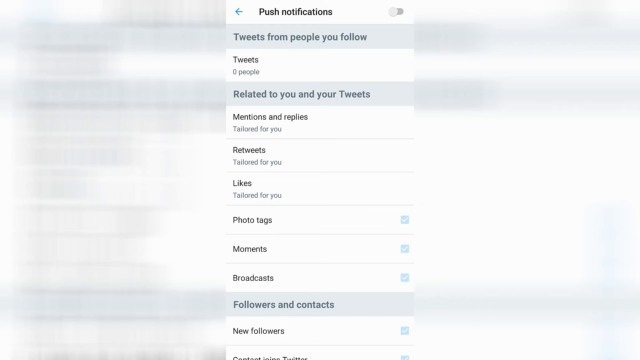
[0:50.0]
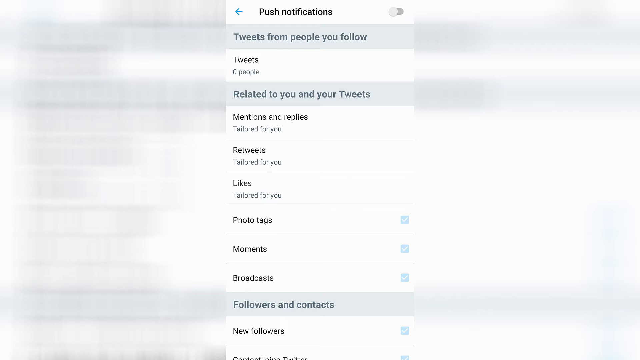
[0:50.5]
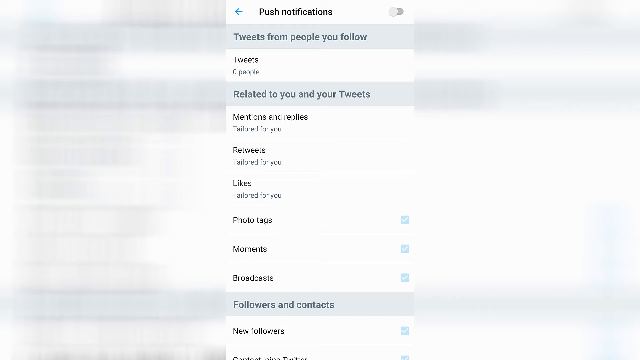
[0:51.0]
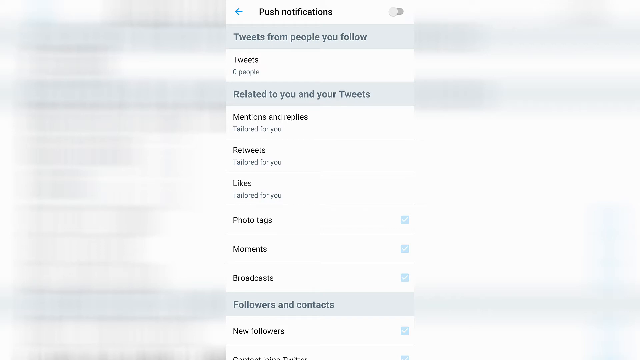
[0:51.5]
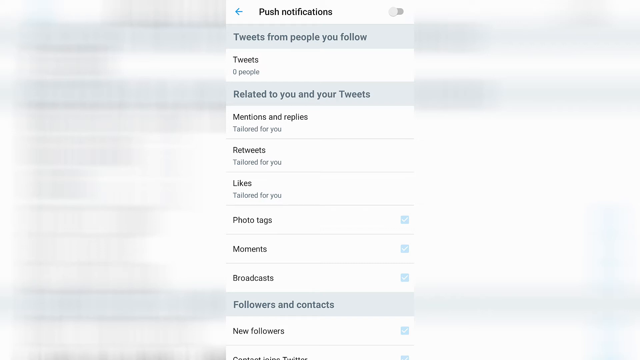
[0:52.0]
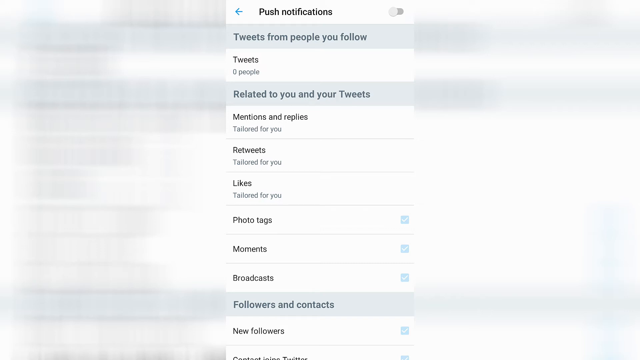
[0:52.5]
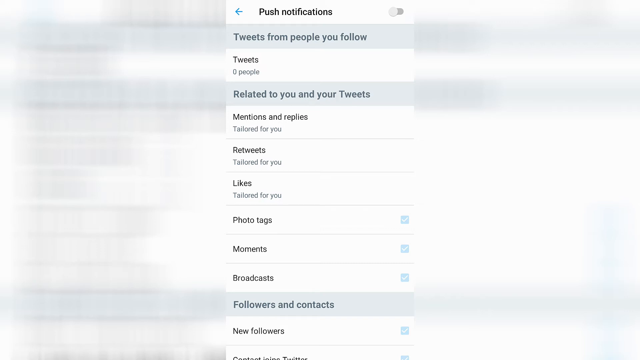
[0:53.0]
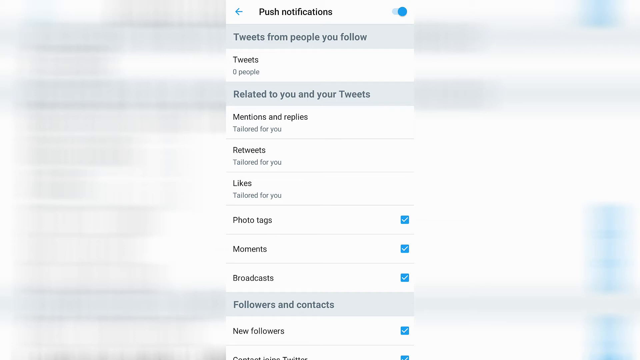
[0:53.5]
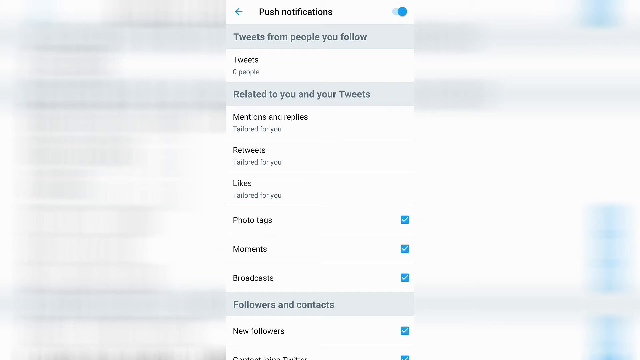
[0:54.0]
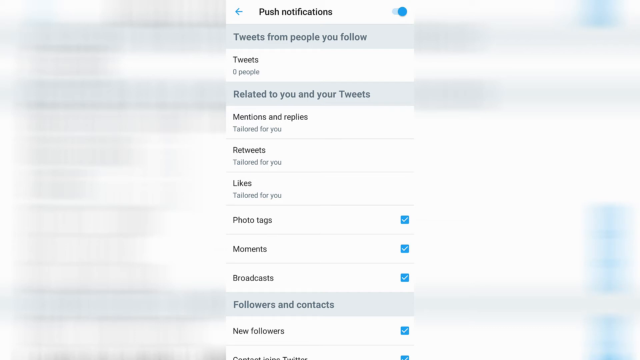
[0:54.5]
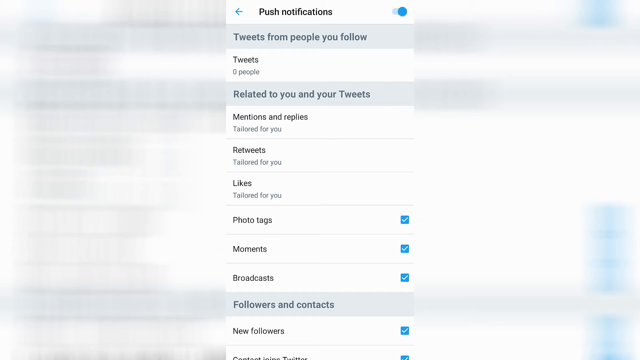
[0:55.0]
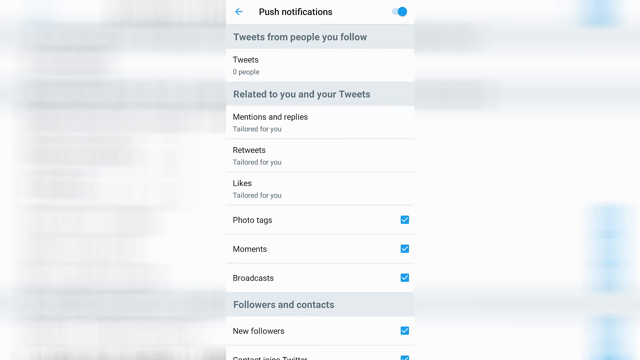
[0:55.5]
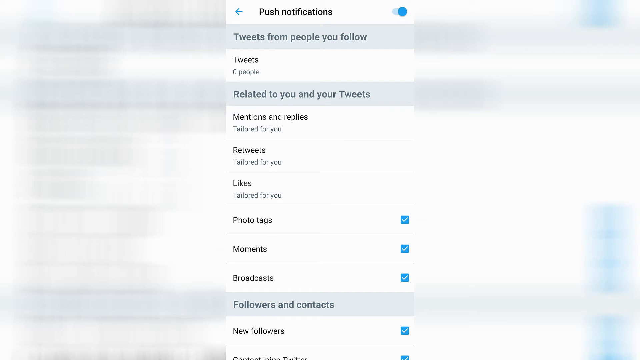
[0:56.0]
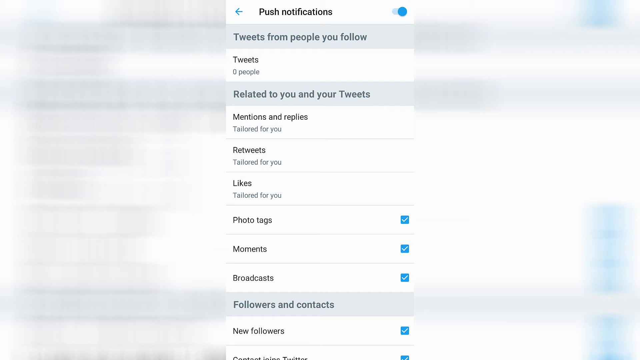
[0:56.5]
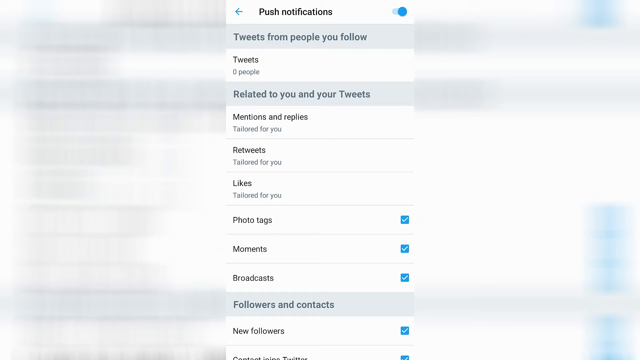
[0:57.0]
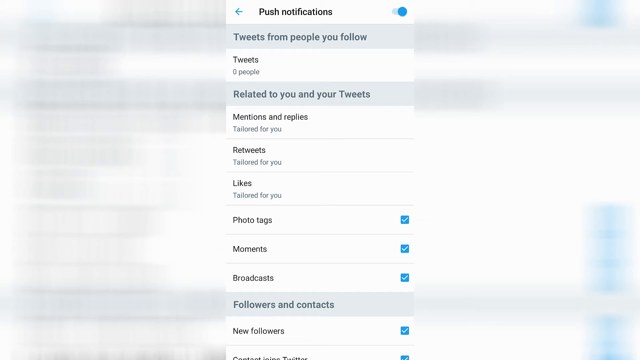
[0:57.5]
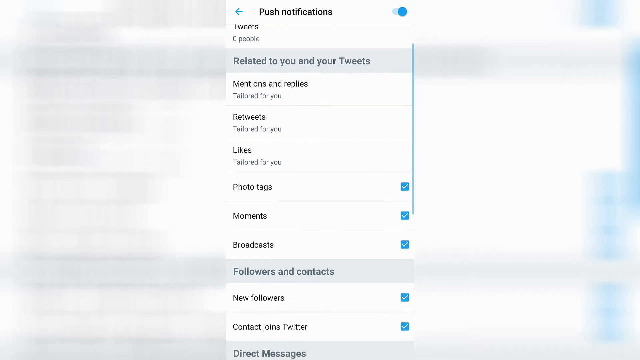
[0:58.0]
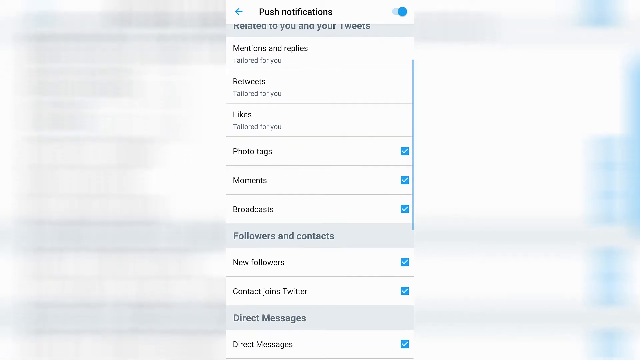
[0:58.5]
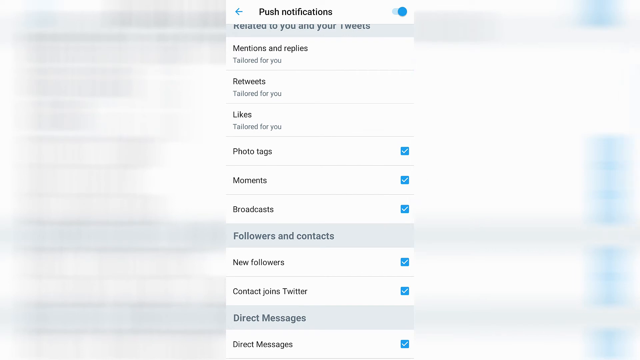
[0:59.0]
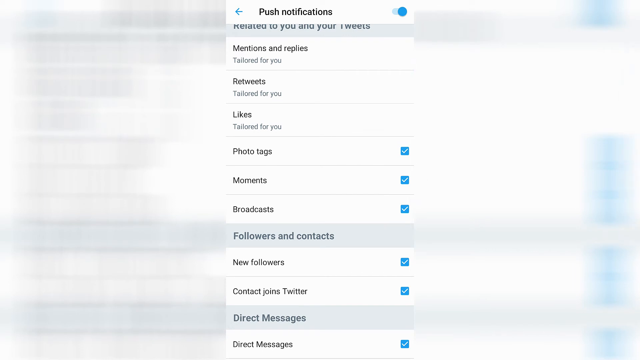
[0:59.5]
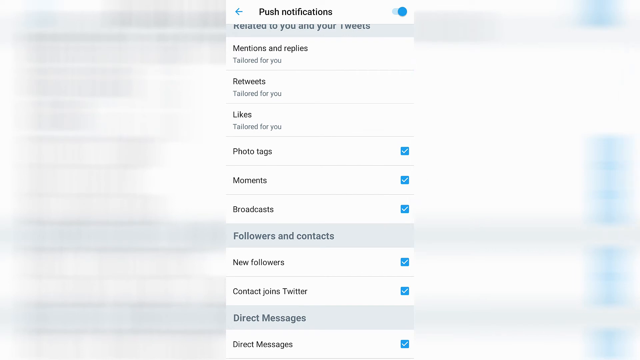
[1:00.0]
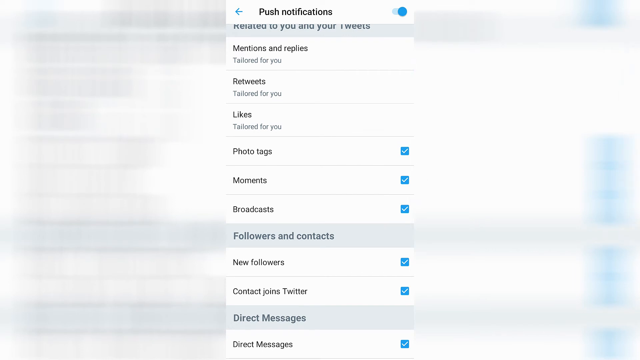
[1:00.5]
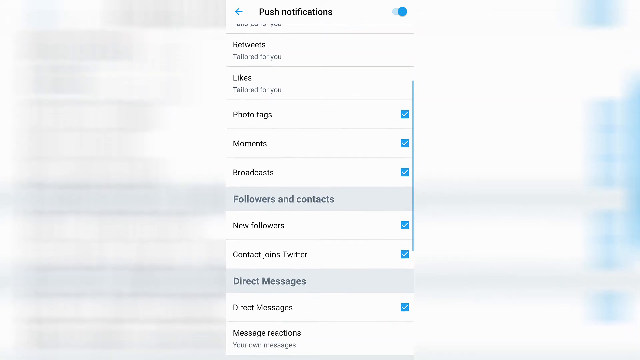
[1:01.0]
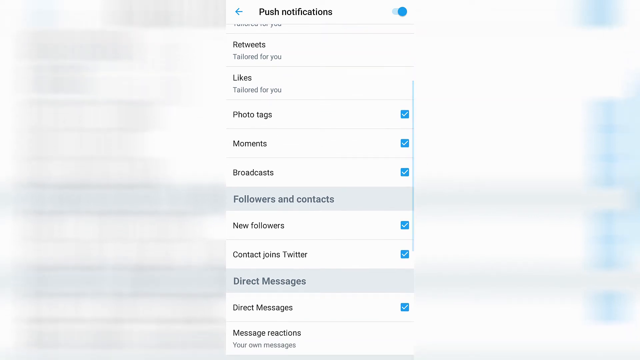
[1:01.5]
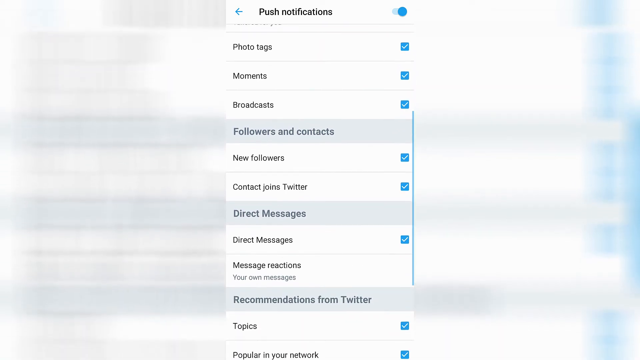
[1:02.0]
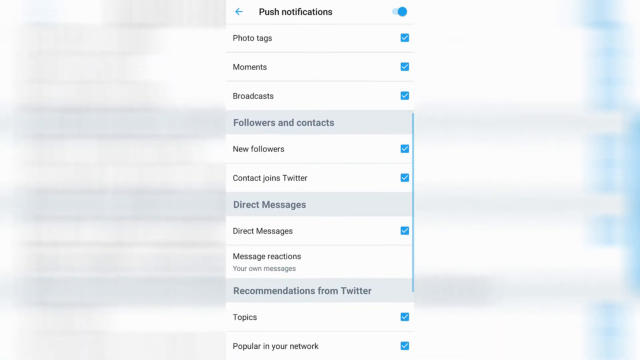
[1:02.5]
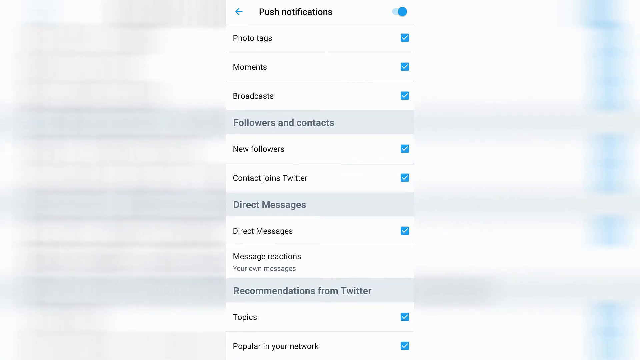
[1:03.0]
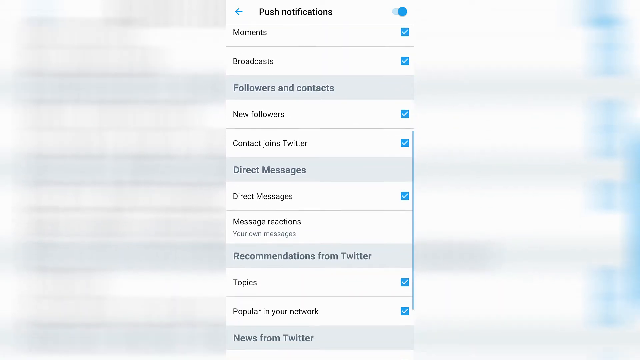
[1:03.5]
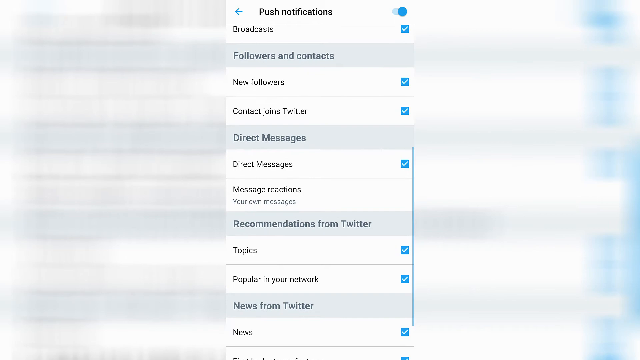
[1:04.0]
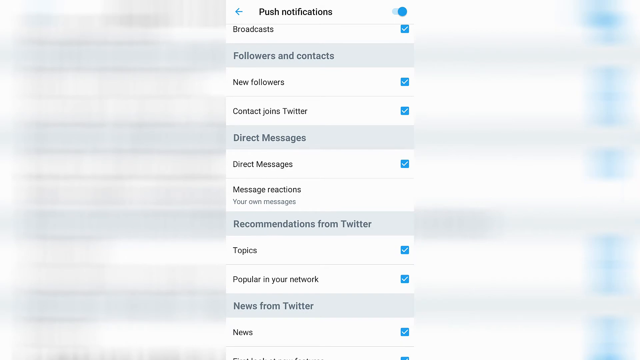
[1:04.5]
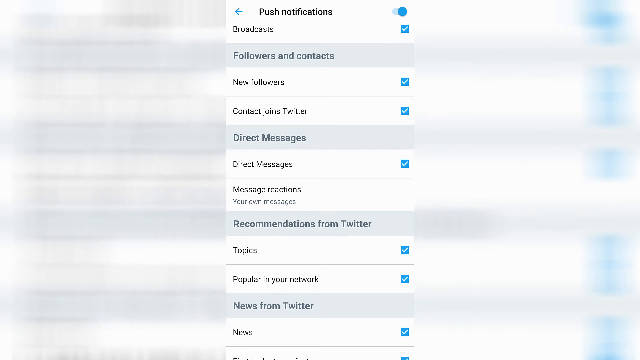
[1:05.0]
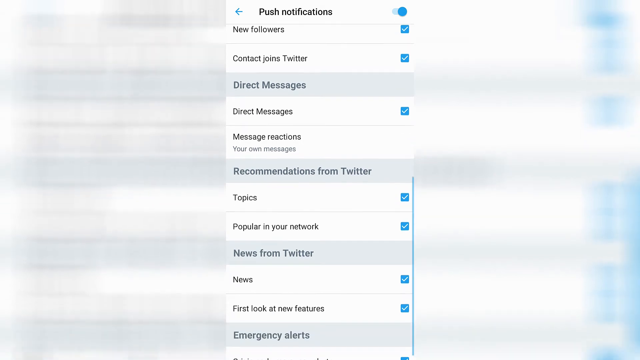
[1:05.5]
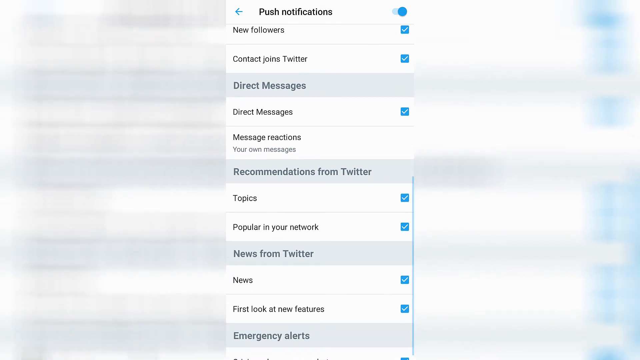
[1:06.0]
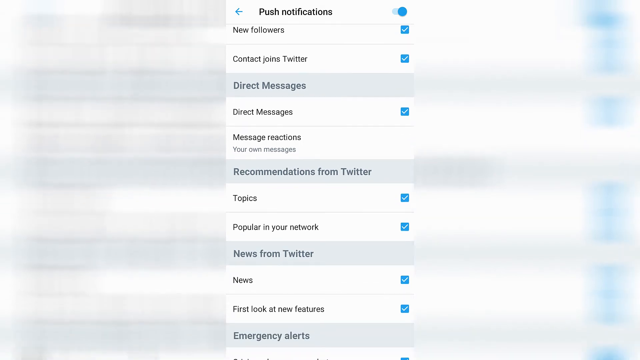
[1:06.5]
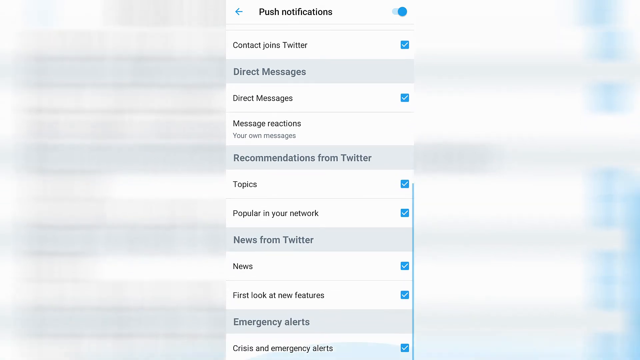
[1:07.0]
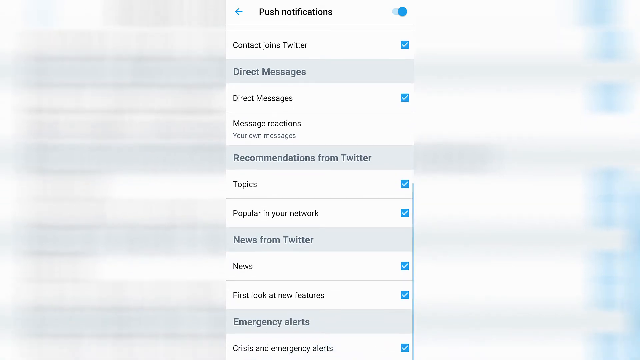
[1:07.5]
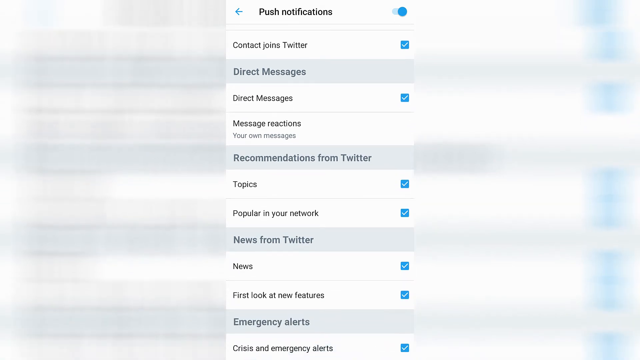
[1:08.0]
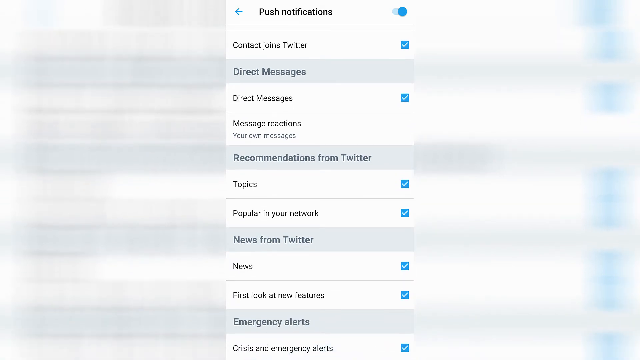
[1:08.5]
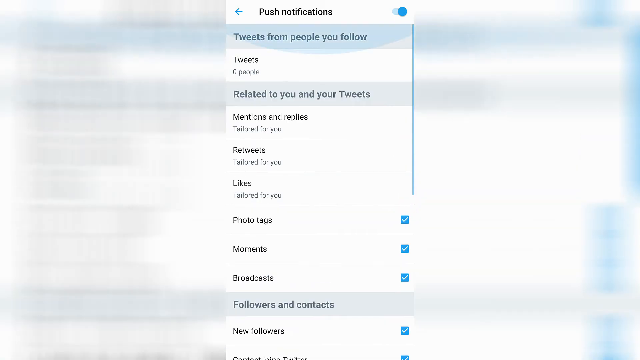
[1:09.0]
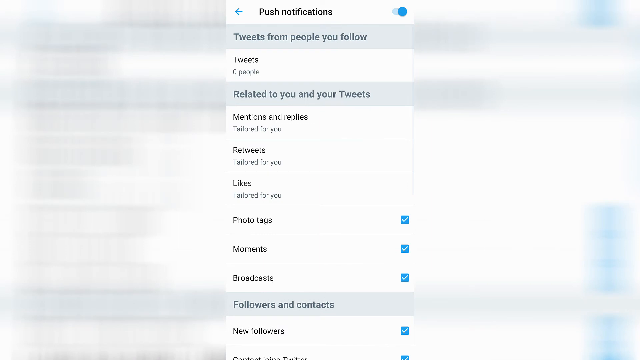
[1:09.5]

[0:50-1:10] The push notifications page remains for a few seconds, then scrolls down very slightly to reveal a gray bar with "Direct messages" in dark gray on the left. Below it, in white, are the options "Direct messages" with a blue checkbox on the far right, a line, "Message reactions," and "Your own messages." Another light gray bar has the gray text "Recommendations from Twitter," followed by "Topics" with a blue checkbox, a line, and "Popular in your network" with another blue checkbox to its right. Another light gray bar reads "News from Twitter" in gray text, followed in white by "News" with a checkbox, a line, and "First look at new features" with another checkbox. Very briefly, a gray bar reading "Emergency alerts" is shown, with an option for "Crisis and emergency alerts" beneath it, also checked. The view then scrolls back up to the top of the push notifications page and stays there for a while. The sliding button in the upper right-hand corner is clicked off and then on again: when it is off, the checkboxes are all faded, and when it is on, the switch turns blue and all the checkboxes return to their normal full blue color. The page stays there, then slides down through the whole page, showing all of the topics listed.